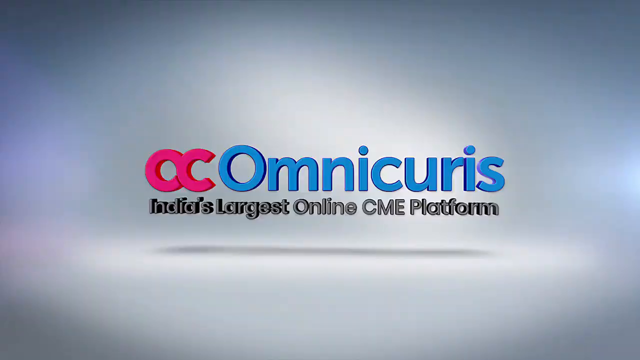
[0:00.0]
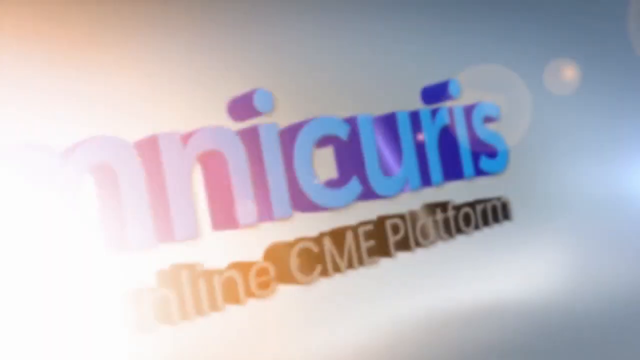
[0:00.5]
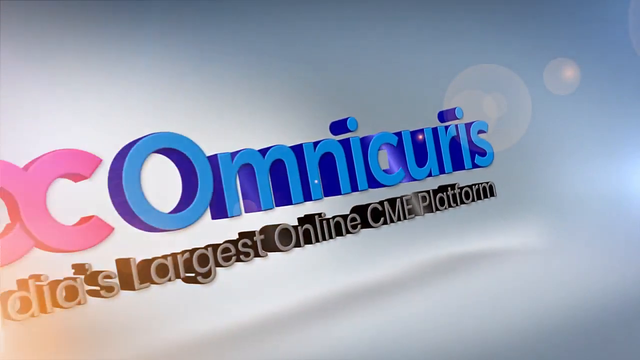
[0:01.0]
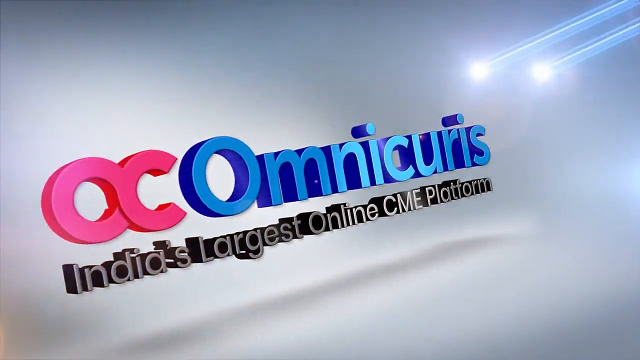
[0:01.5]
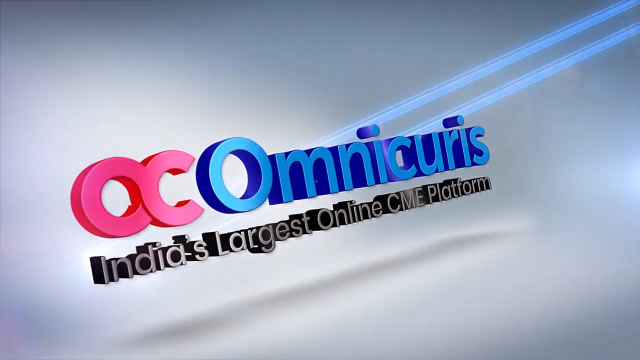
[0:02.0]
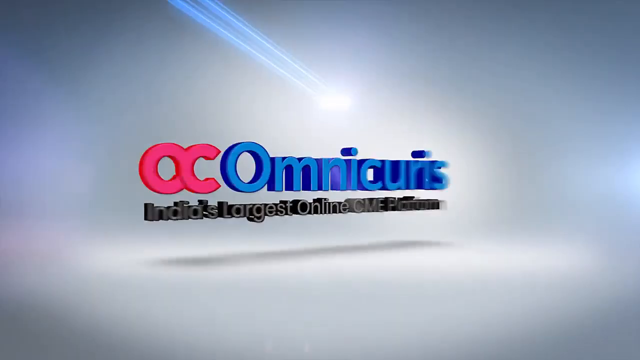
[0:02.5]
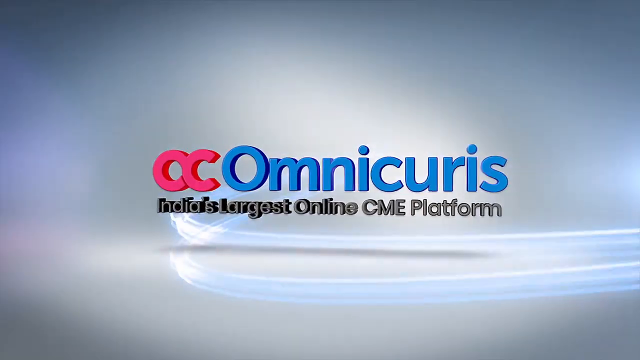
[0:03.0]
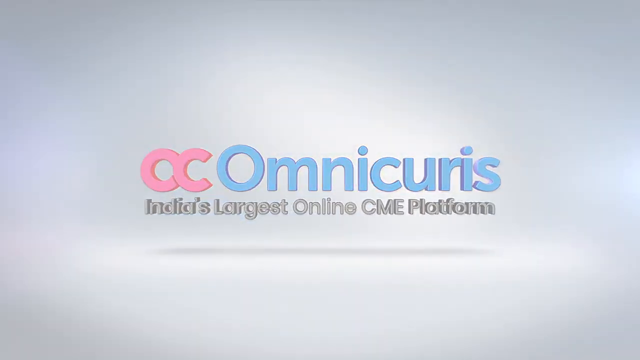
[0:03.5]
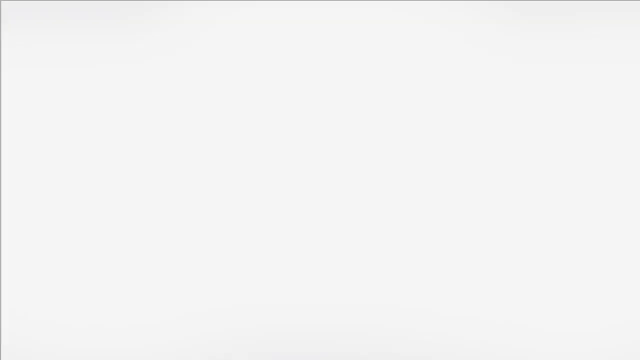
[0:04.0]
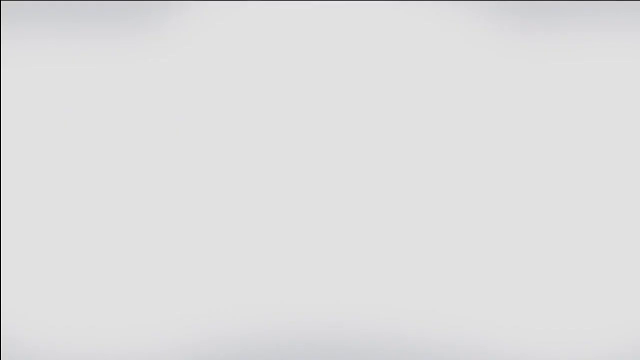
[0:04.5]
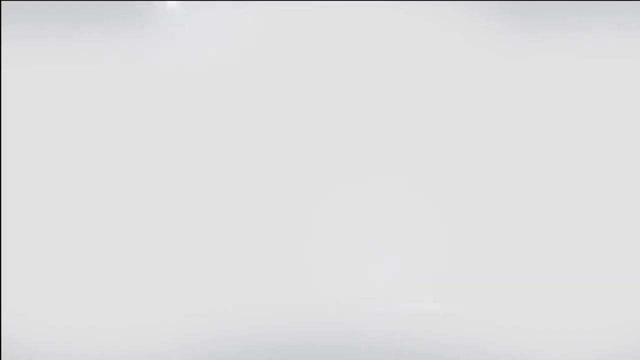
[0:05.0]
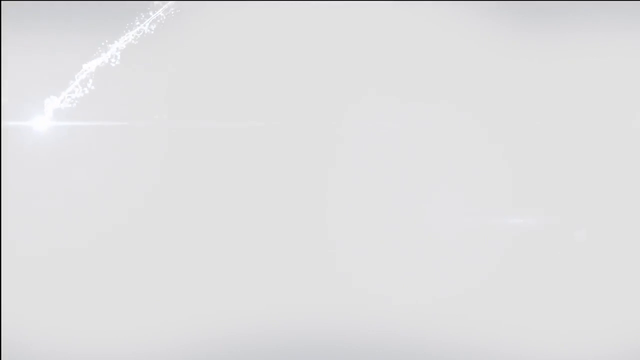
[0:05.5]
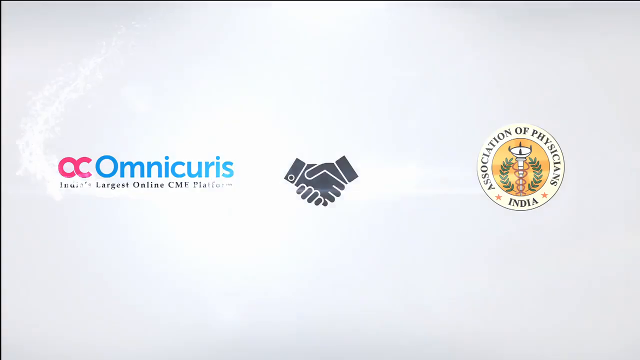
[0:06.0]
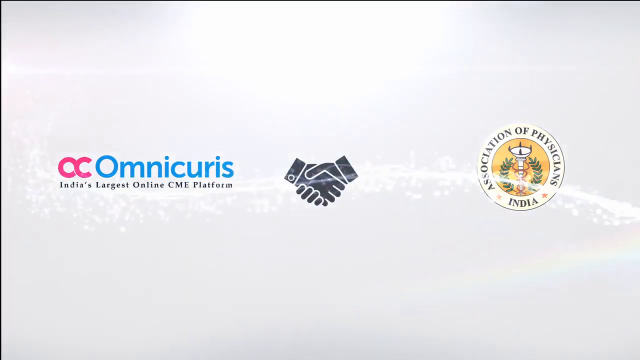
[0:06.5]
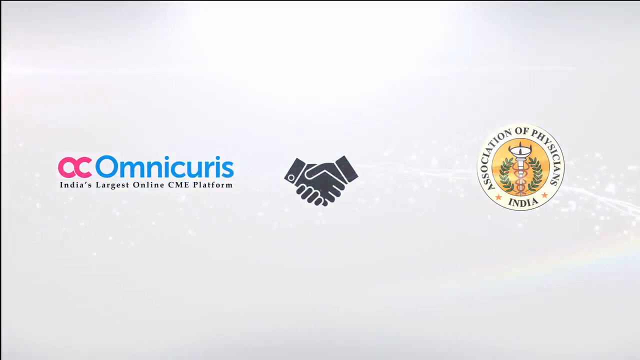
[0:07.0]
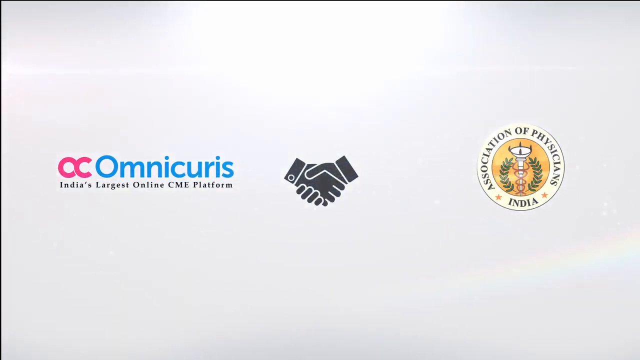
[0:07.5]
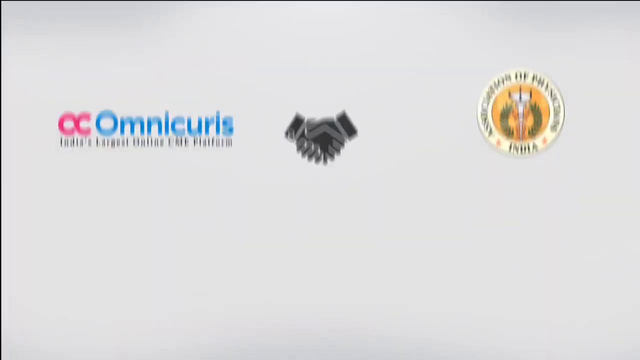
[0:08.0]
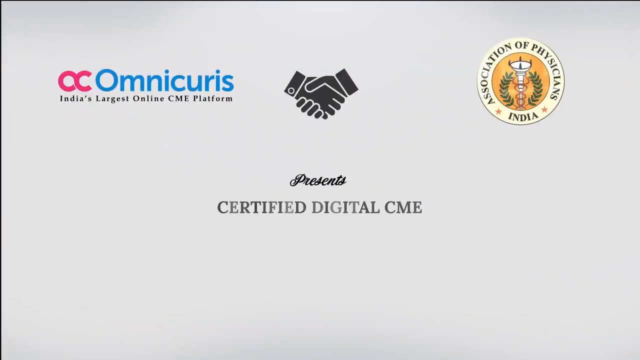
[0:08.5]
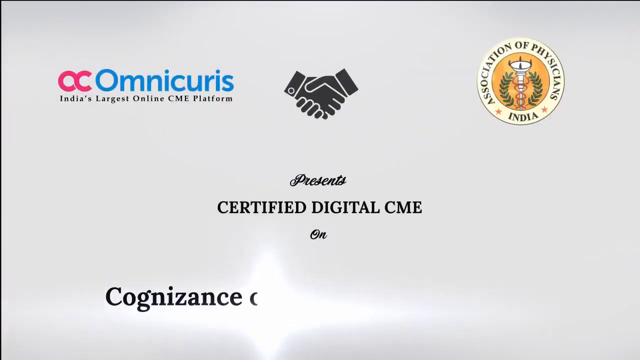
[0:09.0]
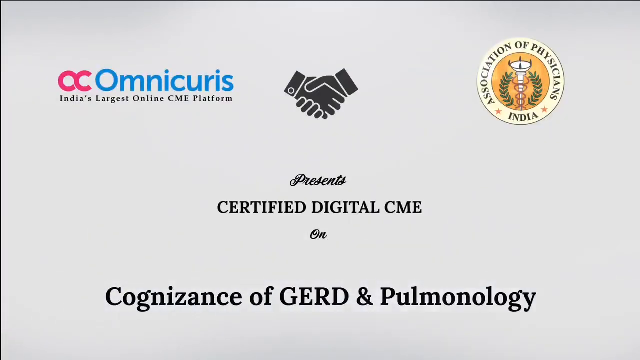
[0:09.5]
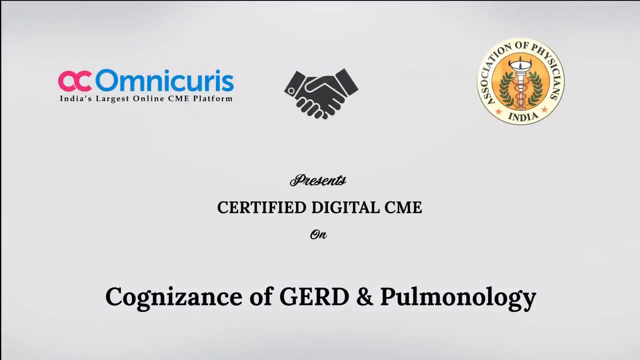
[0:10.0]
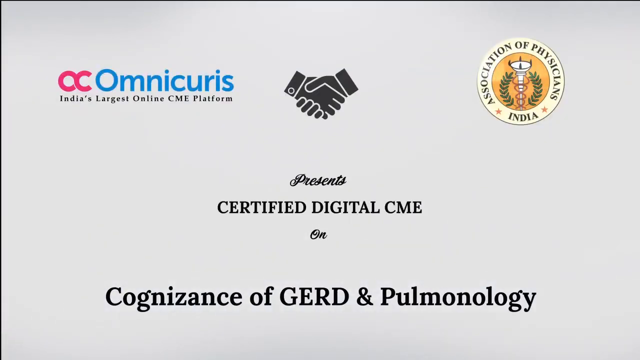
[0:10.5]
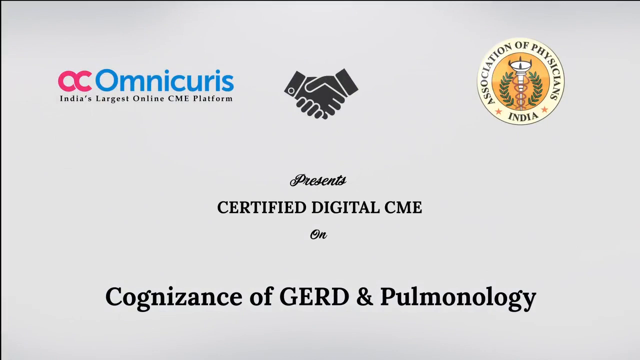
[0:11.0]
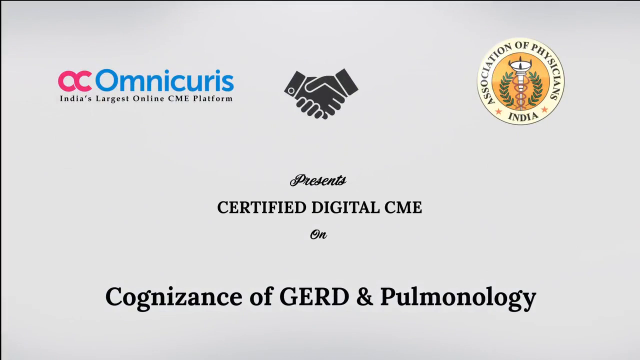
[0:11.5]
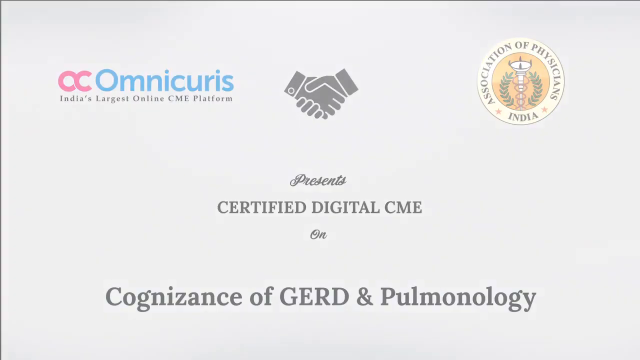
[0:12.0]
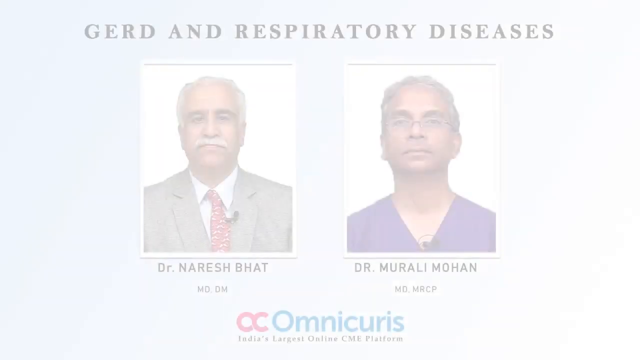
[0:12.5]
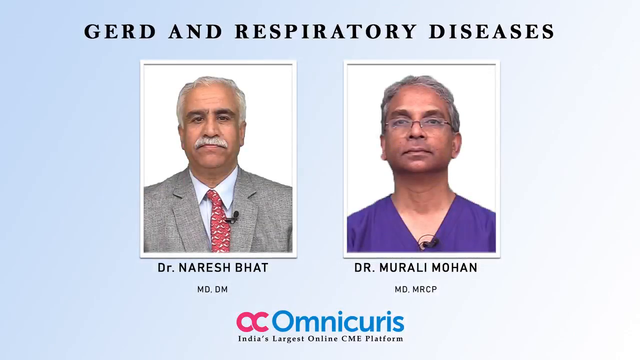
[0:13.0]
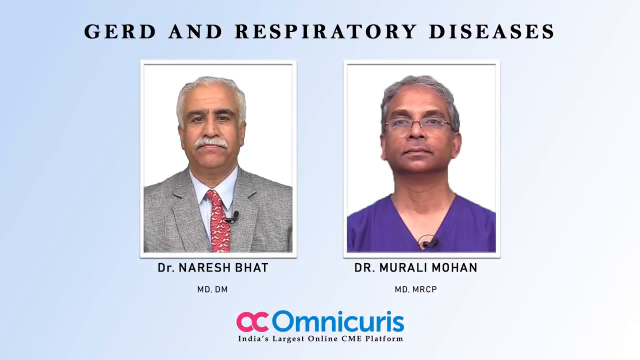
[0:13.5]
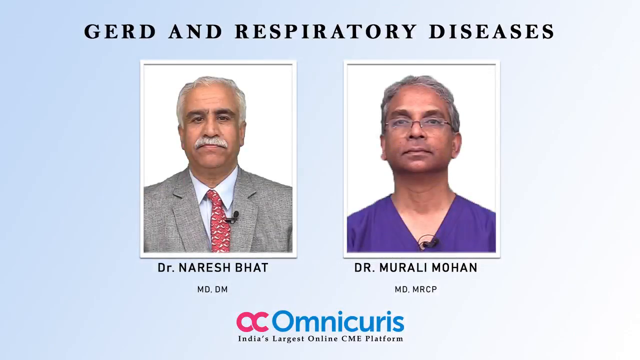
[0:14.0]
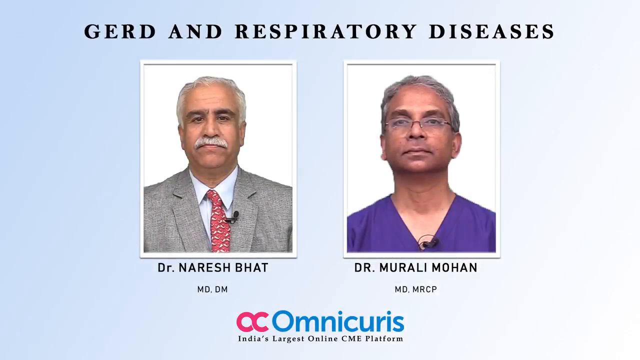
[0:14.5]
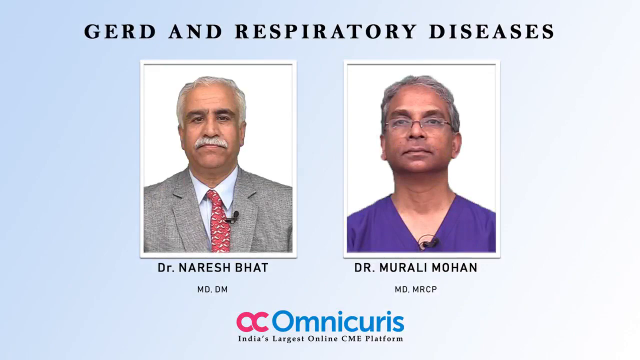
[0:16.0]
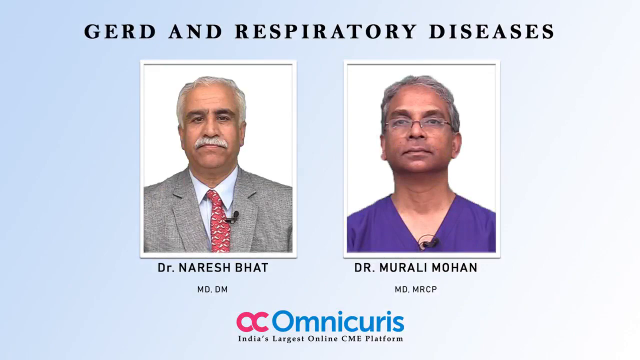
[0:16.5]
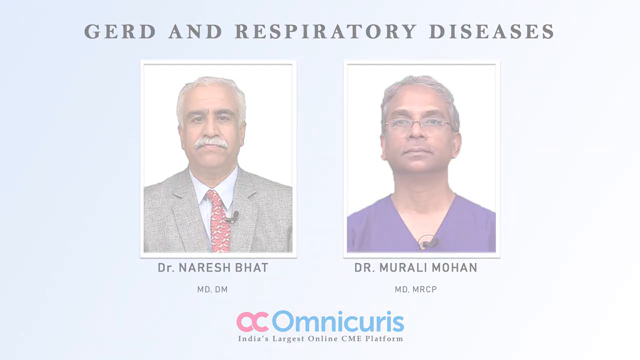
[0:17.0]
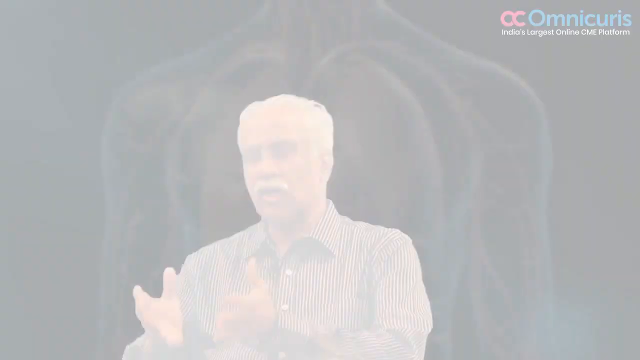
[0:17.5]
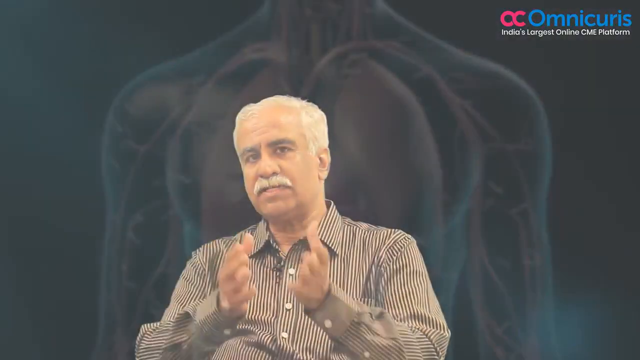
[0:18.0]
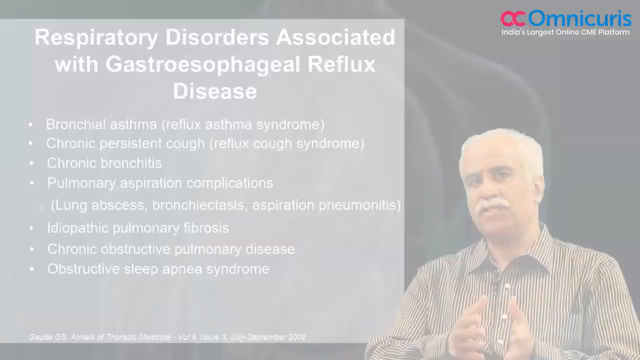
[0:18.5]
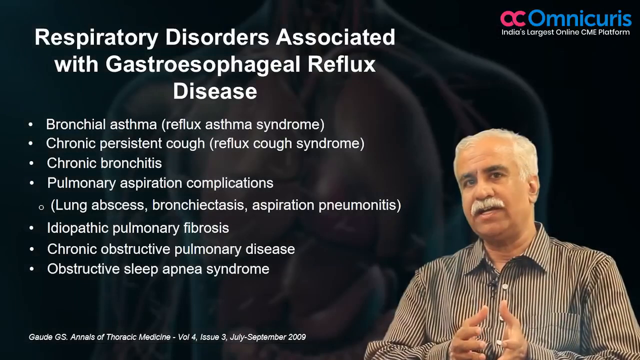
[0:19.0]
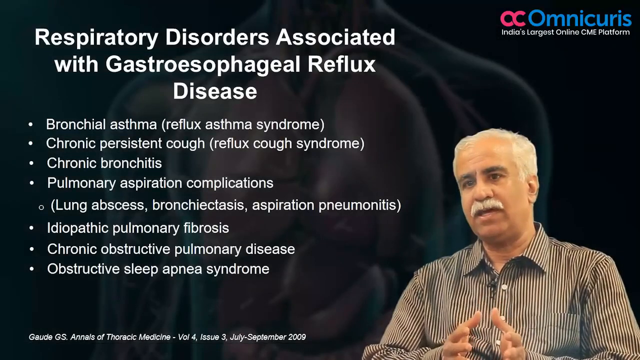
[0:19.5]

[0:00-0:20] The video opens with a logo: "OC" in pink, then "Omnicuris" with "India's largest online CME platform" underneath in black text. A white screen follows, reading "Omnicuris" and then "Association of Physicians India", "certified digital CME", "Dr. Nuresh Bhatt" and "Dr. Murali Mohan". A title card reads "Cognizance of GERD and Pulmonology" with Omnicuris, a handshake emoji, and the Association of Physicians India logo, stating that they present a certified digital CME on "Cognizance of GERD and Pulmonology". Text then lists "respiratory disorders associated with gastroesophageal reflux disease": "bronchial asthma, reflux asthma syndrome, chronic persistent cough, reflux cough syndrome, chronic bronchitis, pulmonary aspiration complications, lung abscess, bronchiostasis, aspiration pneumonia, pneumonitis, idiopathic pulmonary fibrosis, chronic obstructive pulmonary disease, and obstructive sleep apnea syndrome". A doctor on the side of the screen talks about this; he wears a striped shirt and has white hair and a mustache.